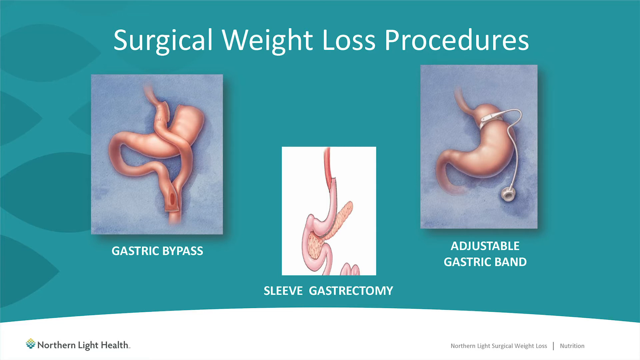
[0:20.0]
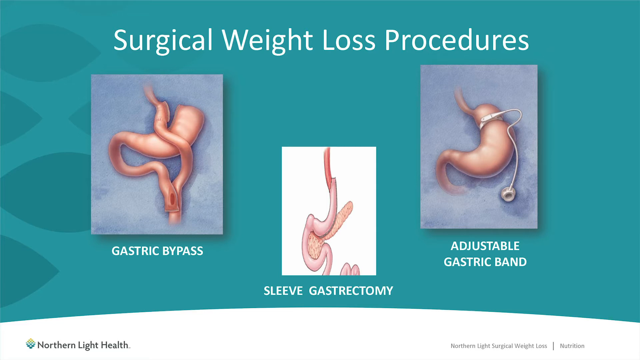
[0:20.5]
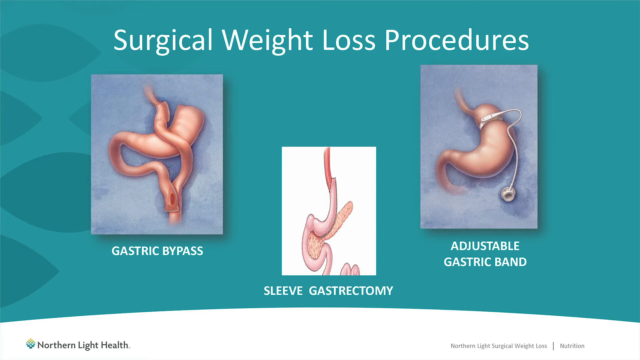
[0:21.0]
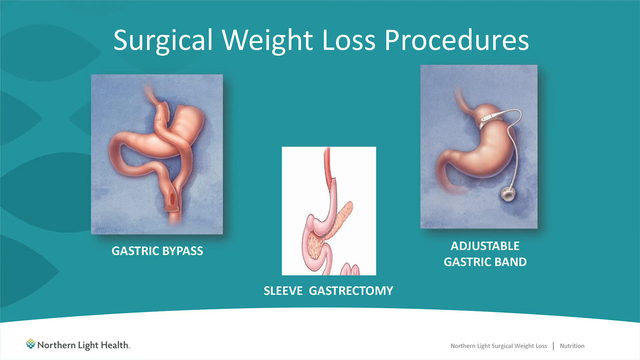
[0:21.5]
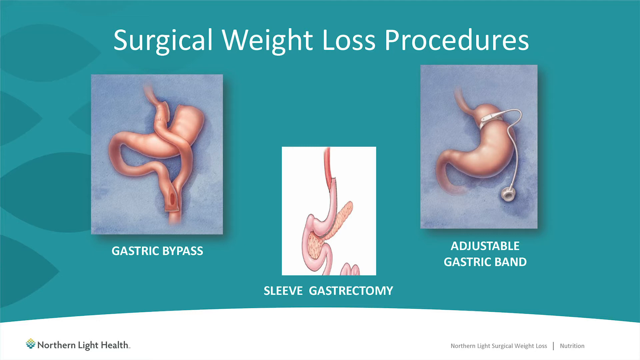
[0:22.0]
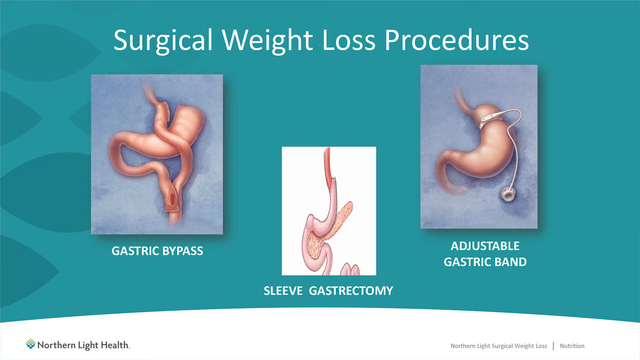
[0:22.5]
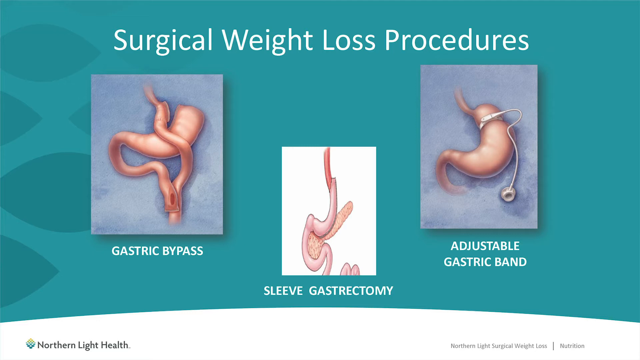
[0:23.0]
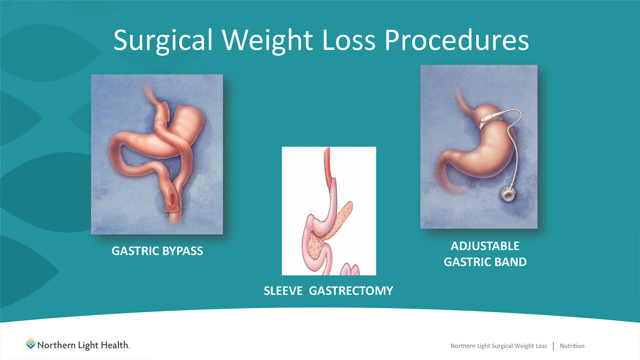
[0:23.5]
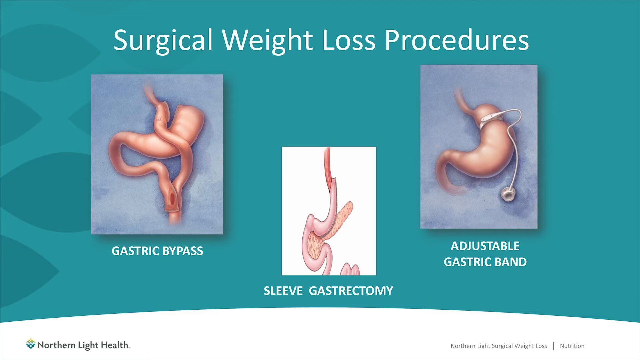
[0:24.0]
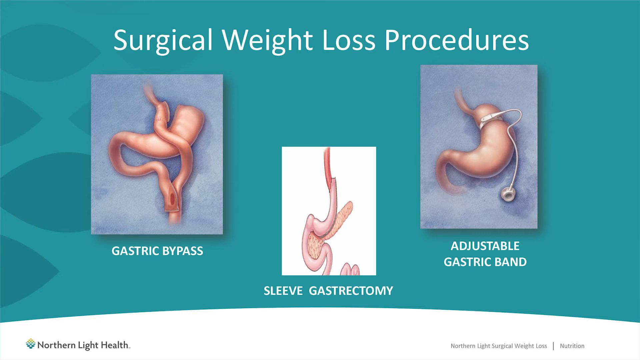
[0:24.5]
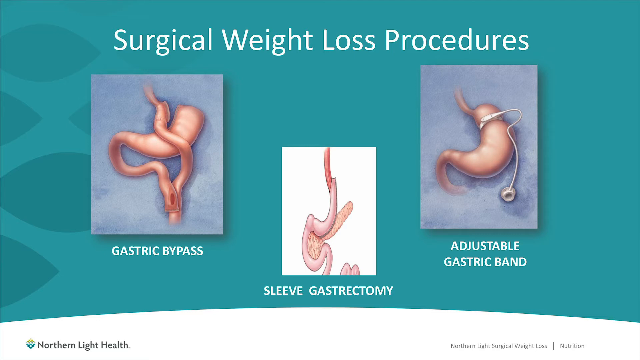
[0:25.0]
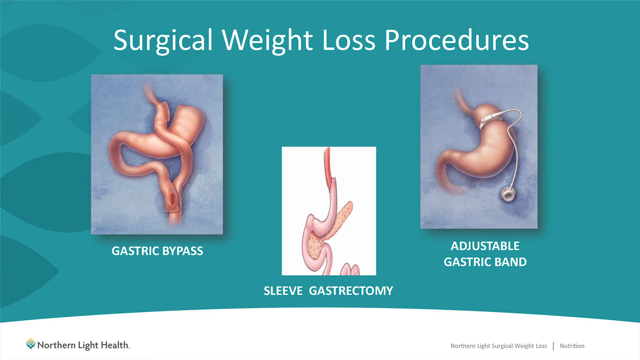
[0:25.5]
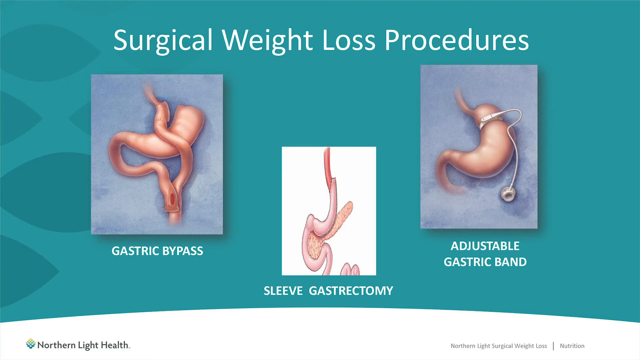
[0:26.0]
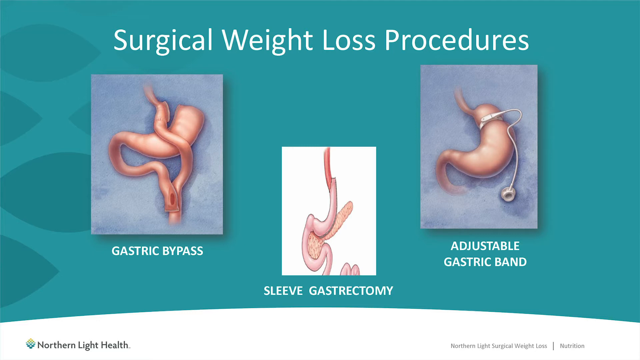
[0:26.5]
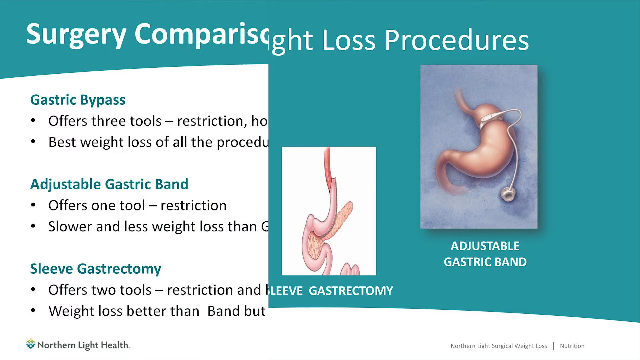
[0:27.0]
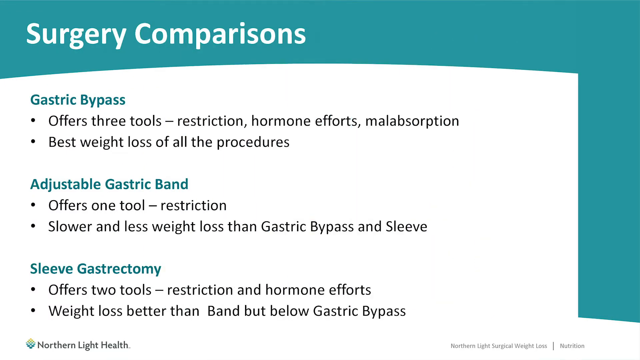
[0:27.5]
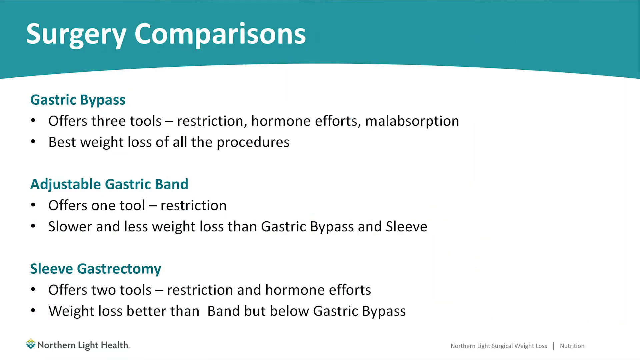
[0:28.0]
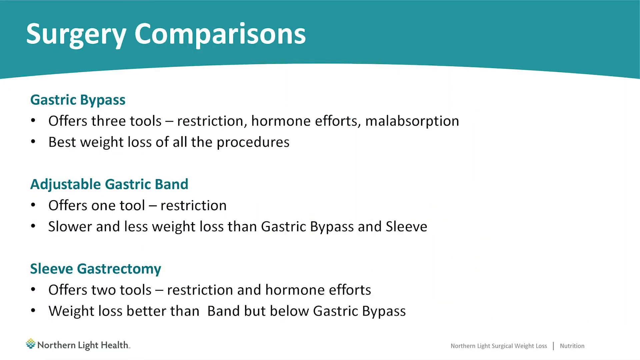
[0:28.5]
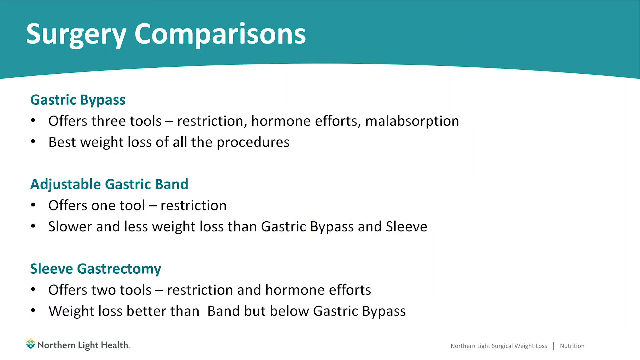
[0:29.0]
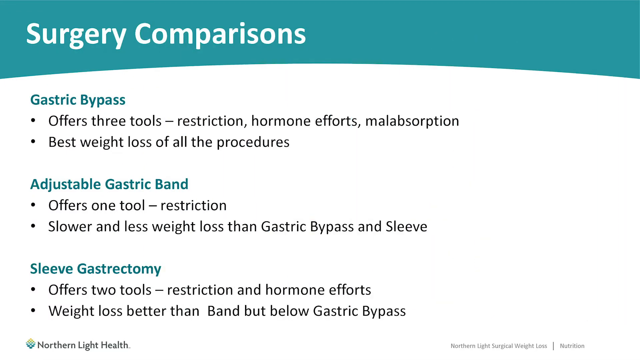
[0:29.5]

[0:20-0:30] The title "Surgical Weight Loss Procedures" is on screen with "Gastric Bypass," "Sleeve Gastrectomy," and "Adjustable Gastric Band." Each procedure has an accompanying illustration of a stomach, shown in pink; two of the illustrations have purple backgrounds and one has a white background. All of this is set against a blue background. Next comes a slide titled "Surgery Comparisons": "Gastric bypass offers three tools. Restriction, hormone effects, malabsorption. Best weight loss of all of the procedures." "Adjustable gastric band offers one tool restriction. Slower and less weight loss than gastric bypass and sleeve." "Sleeve gastrectomy offers two tools. Restriction and hormone effects. Weight loss better than band but below gastric bypass."